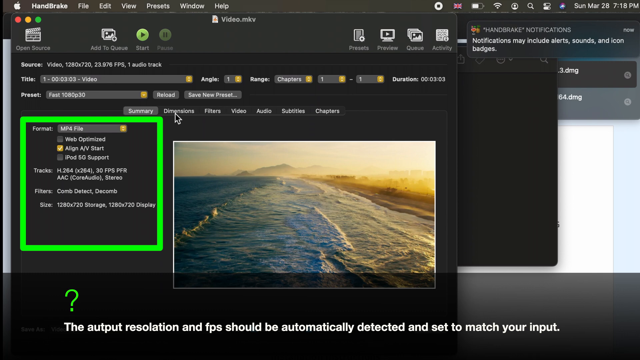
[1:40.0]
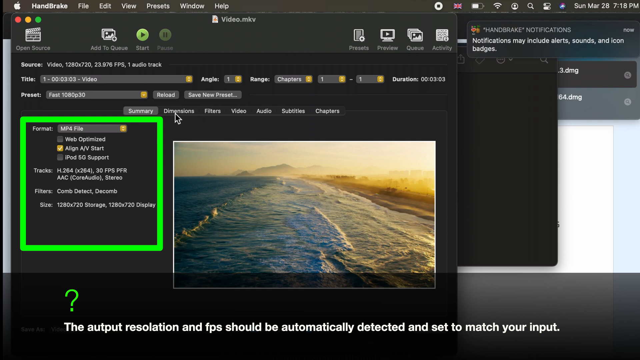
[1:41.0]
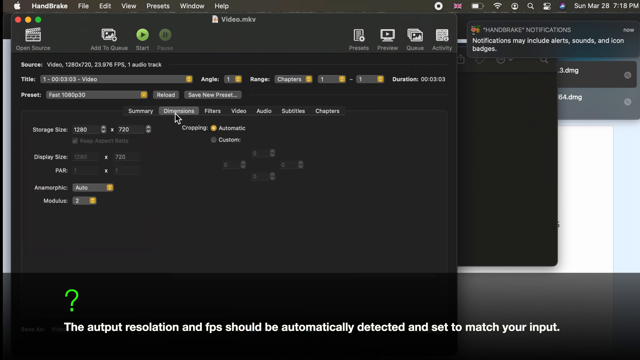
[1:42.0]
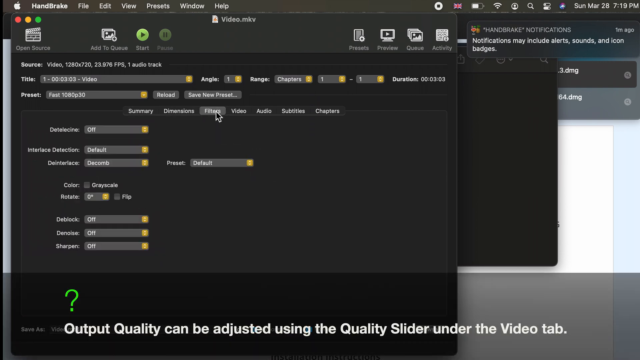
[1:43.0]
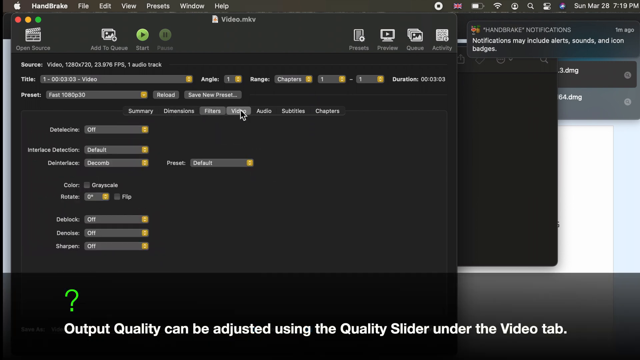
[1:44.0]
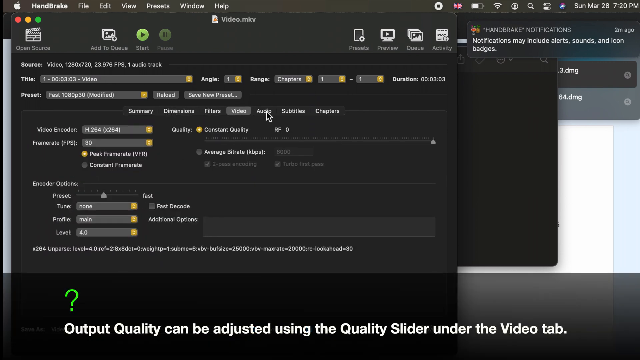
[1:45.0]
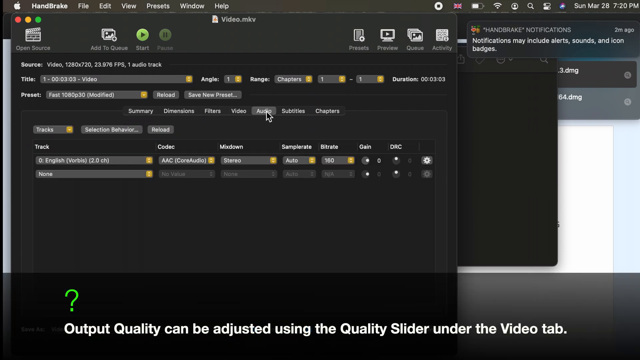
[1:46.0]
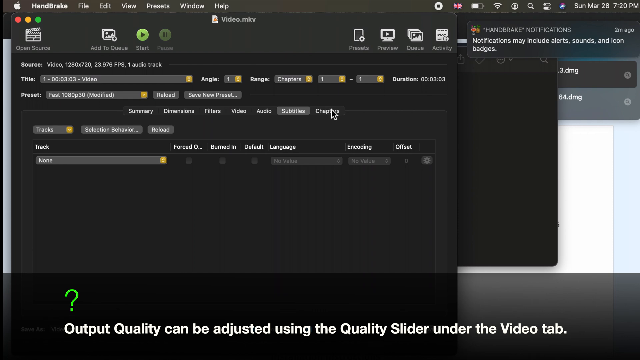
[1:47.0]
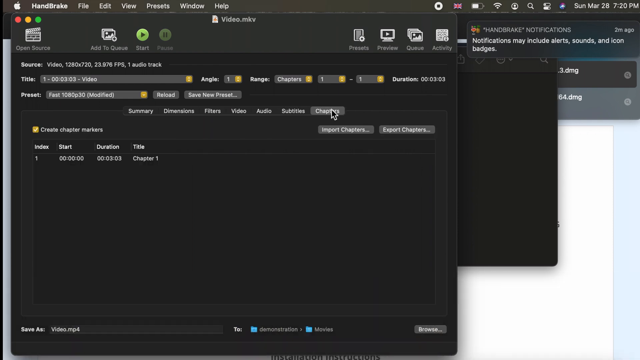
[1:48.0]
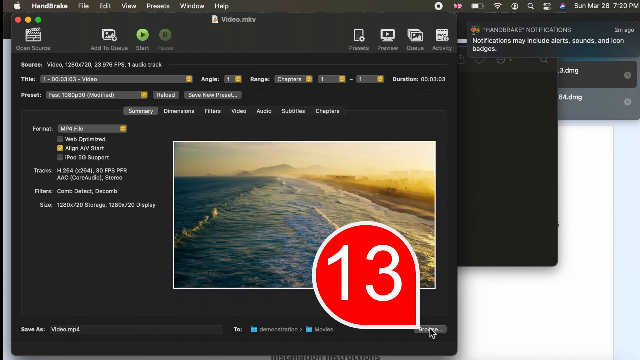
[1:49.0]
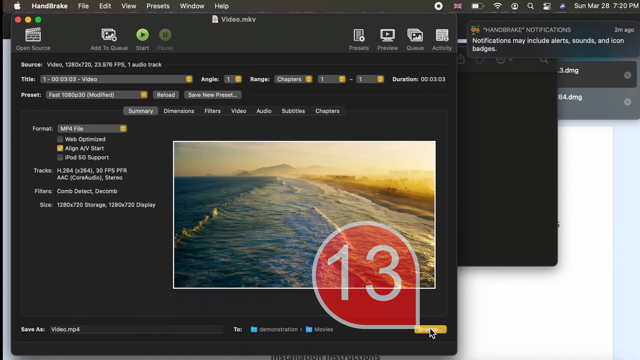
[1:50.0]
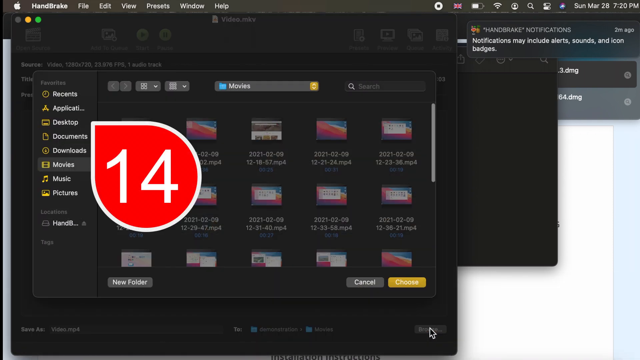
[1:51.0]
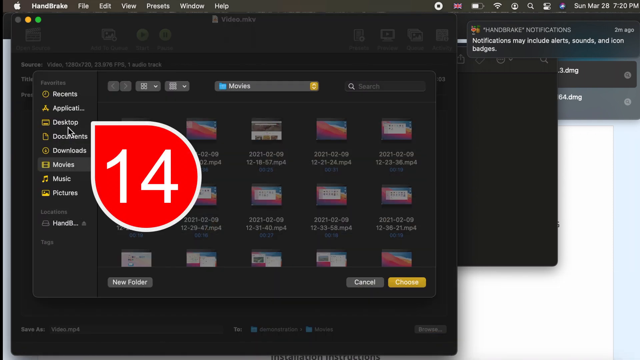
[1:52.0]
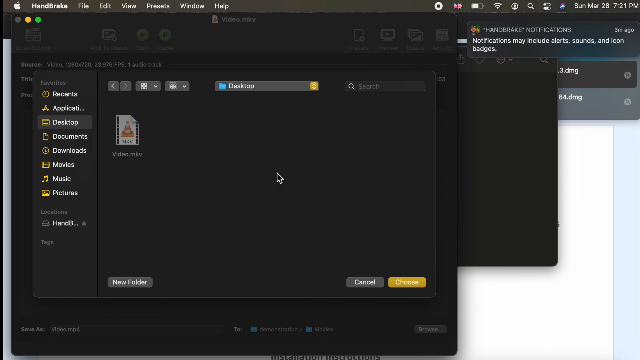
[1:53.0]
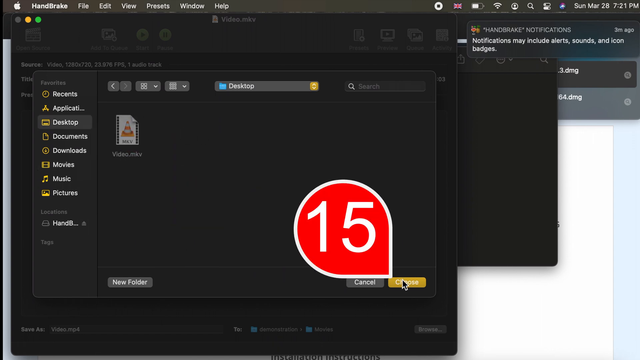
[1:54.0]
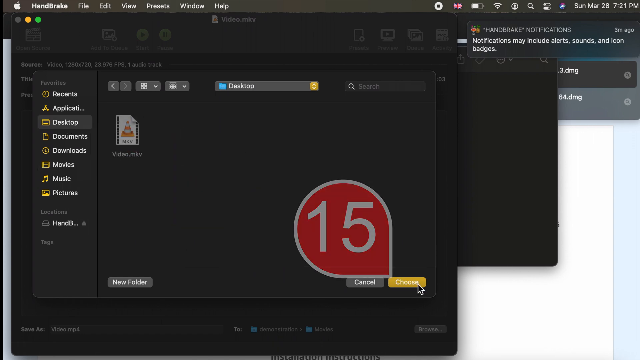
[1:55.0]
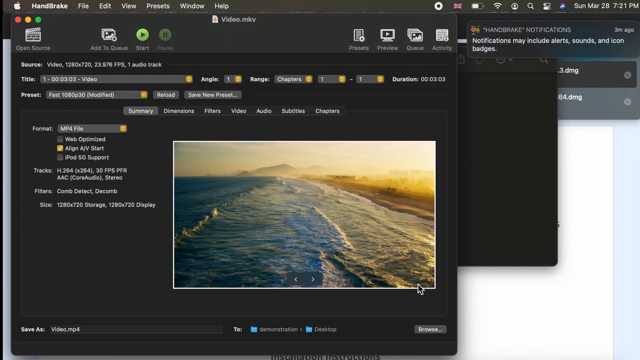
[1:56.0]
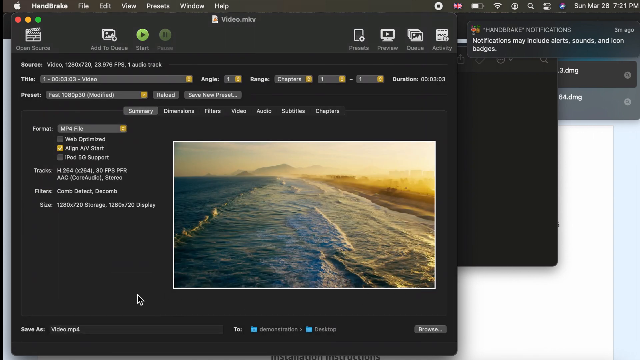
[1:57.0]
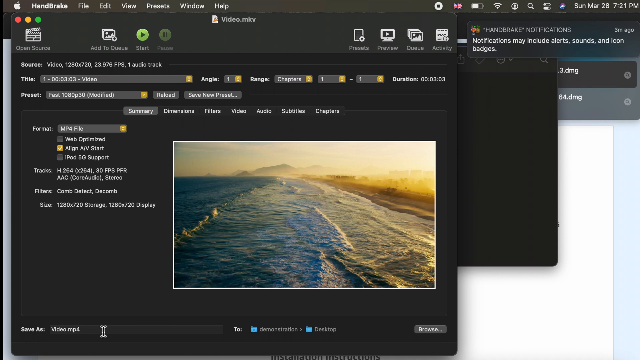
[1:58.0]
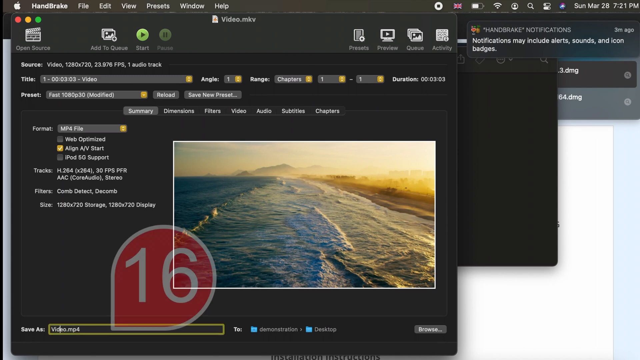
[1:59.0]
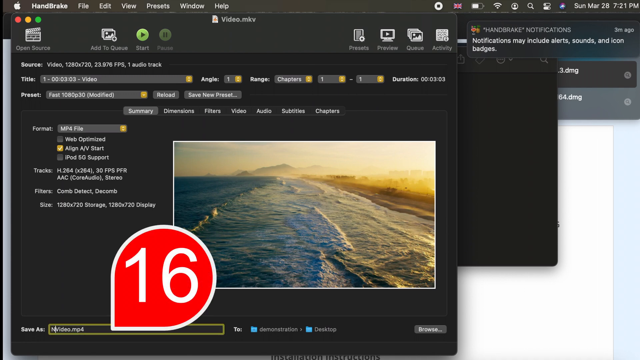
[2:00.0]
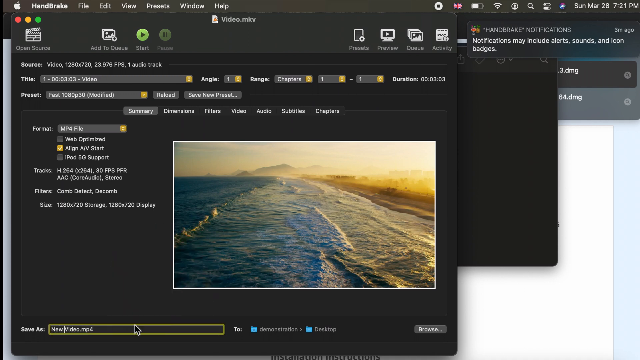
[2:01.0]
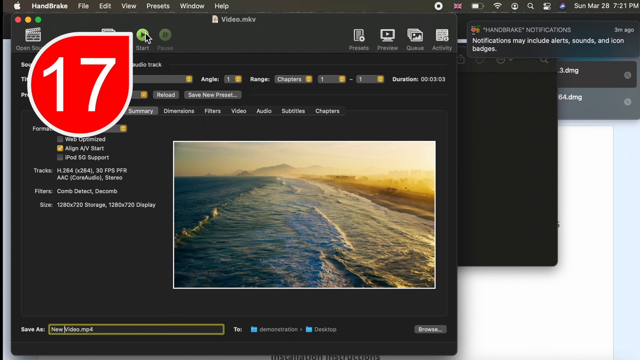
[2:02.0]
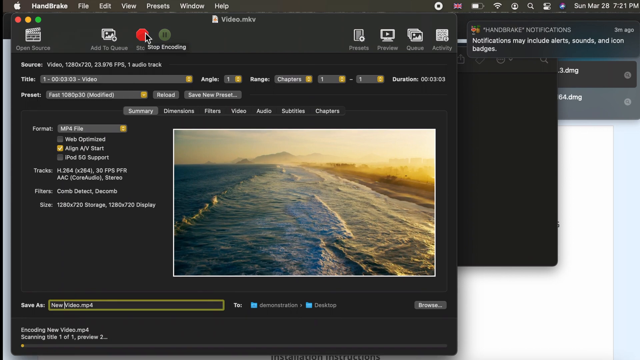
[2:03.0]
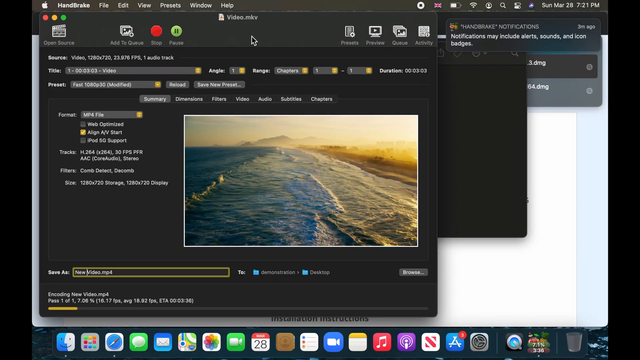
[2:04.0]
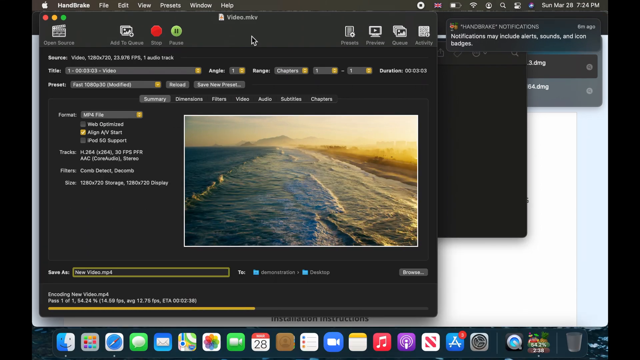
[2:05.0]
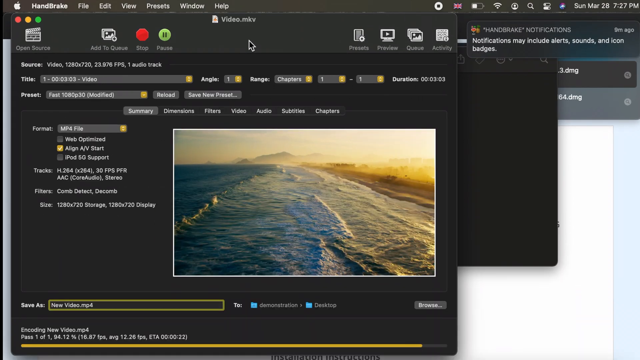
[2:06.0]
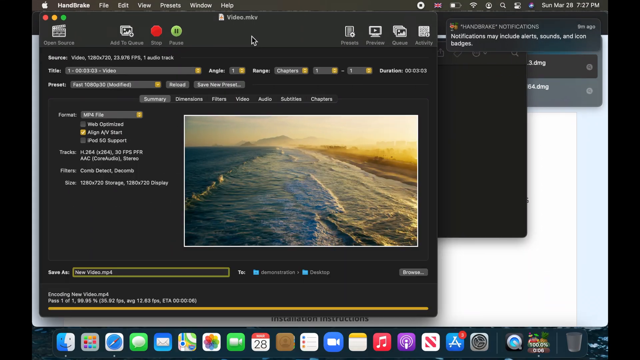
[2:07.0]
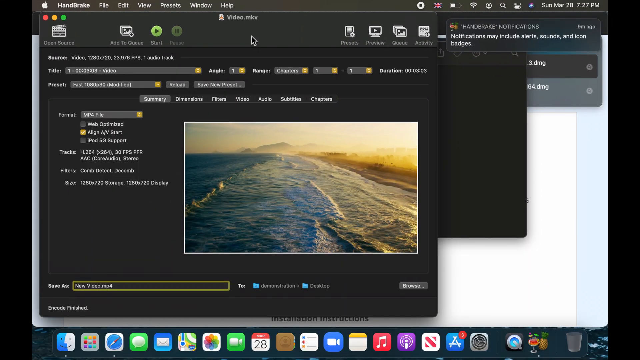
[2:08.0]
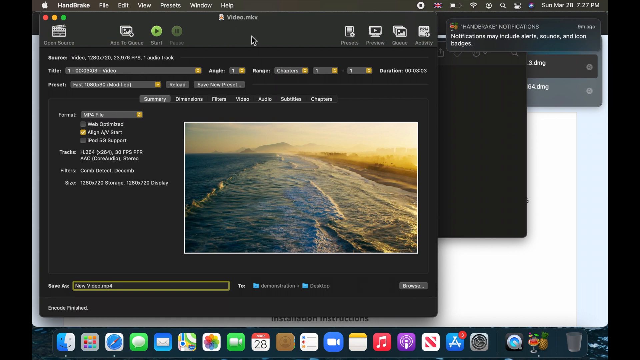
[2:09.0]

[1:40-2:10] Some software is open, apparently on a Mac, since the little Apple logo is visible in the upper left-hand corner. A section of the software has been outlined in a thin green square, like someone is doing a tutorial, and next to it is an image of the ocean. In the lower left, next to a green question mark, text reads "Output quality can be adjusted using the quality slider under the video tab." A red notification balloon with 13 pops up, then another in the upper left with 14. Desktop is clicked, and another balloon with 15 pops up. Some kind of yellow button is selected and clicked. "Save as" appears in the lower left, a title is typed in, and another of the balloons pops up. The view zooms out slightly, zooms back in, and then zooms out.